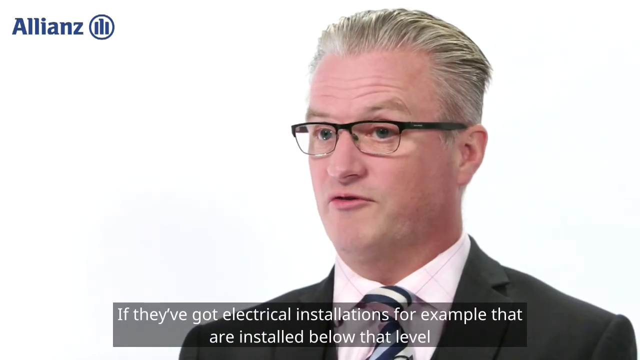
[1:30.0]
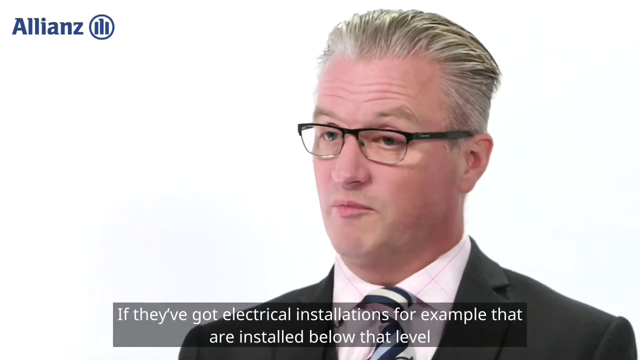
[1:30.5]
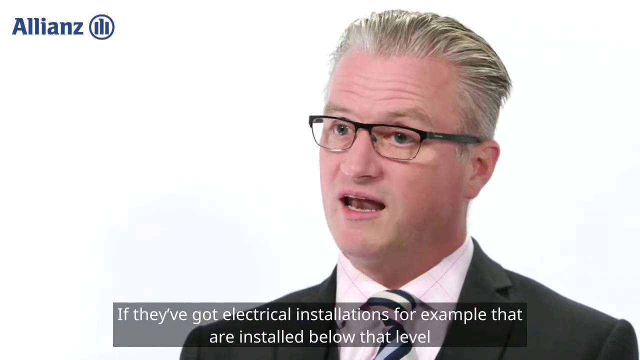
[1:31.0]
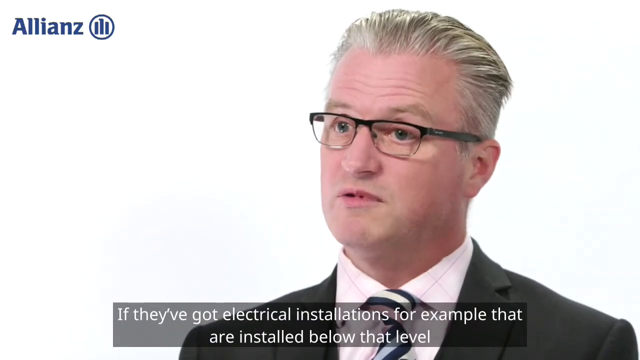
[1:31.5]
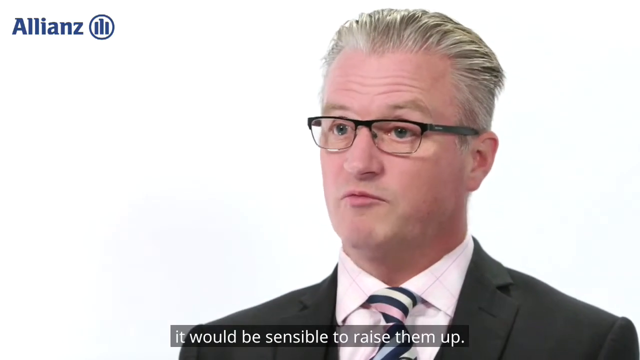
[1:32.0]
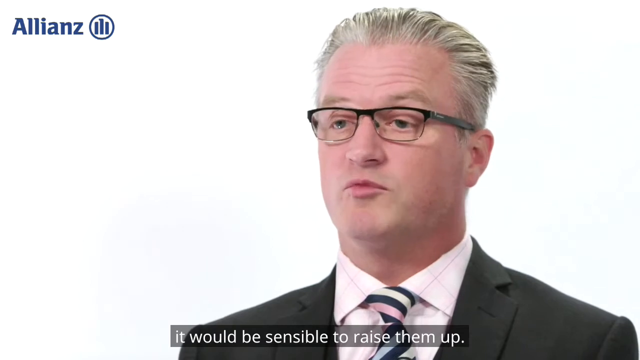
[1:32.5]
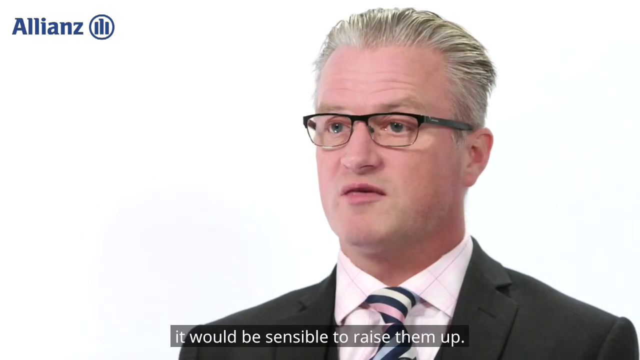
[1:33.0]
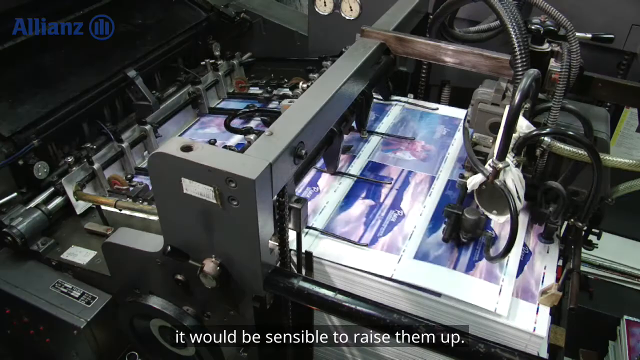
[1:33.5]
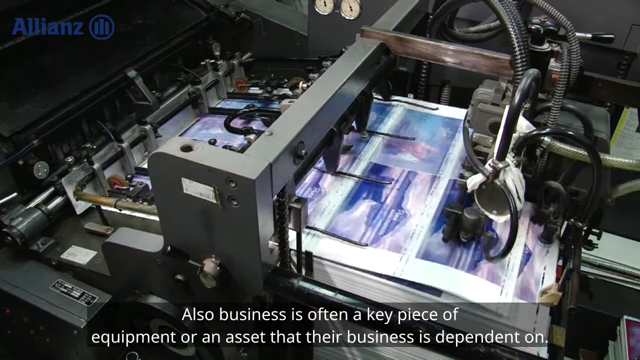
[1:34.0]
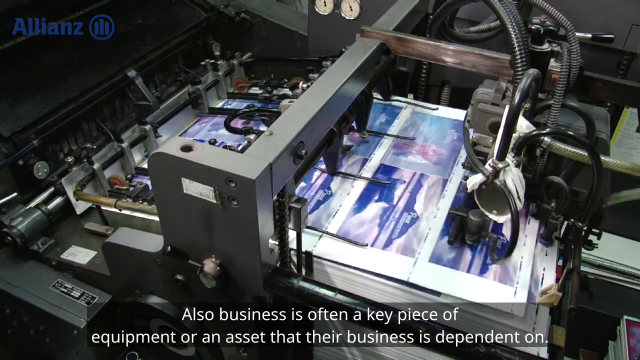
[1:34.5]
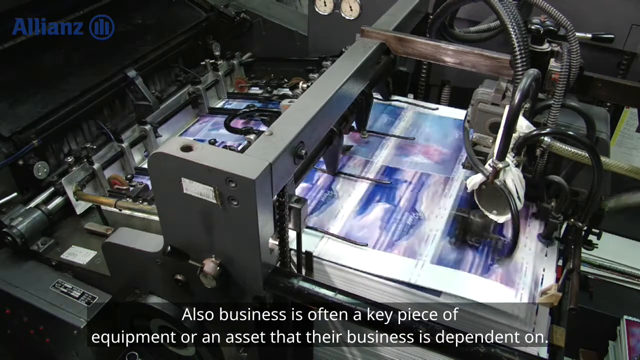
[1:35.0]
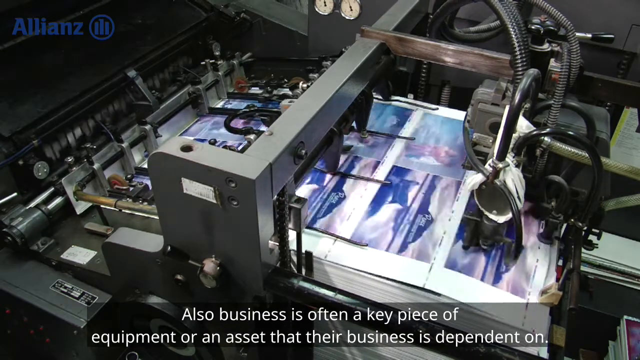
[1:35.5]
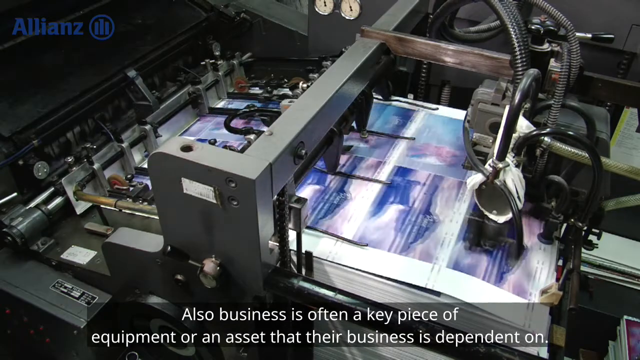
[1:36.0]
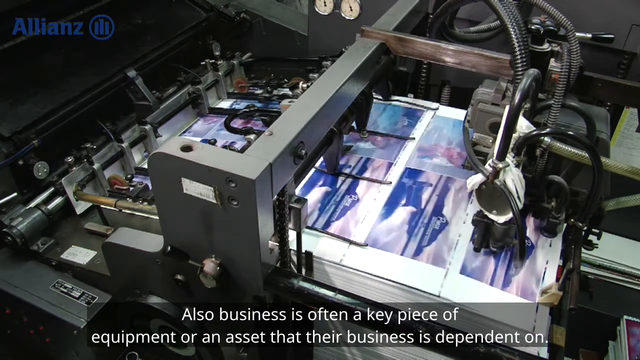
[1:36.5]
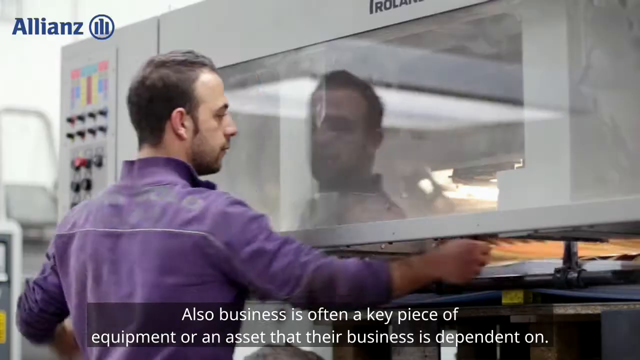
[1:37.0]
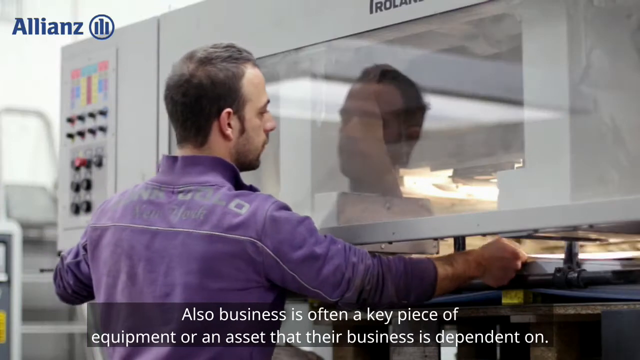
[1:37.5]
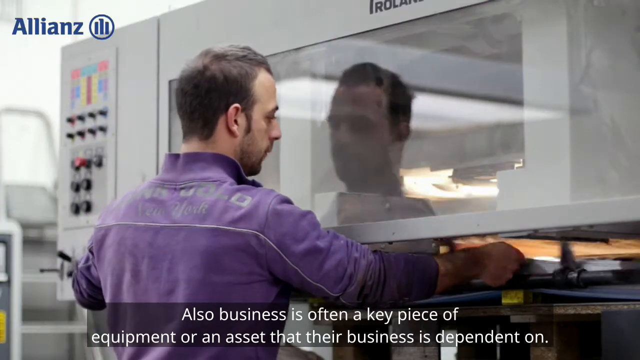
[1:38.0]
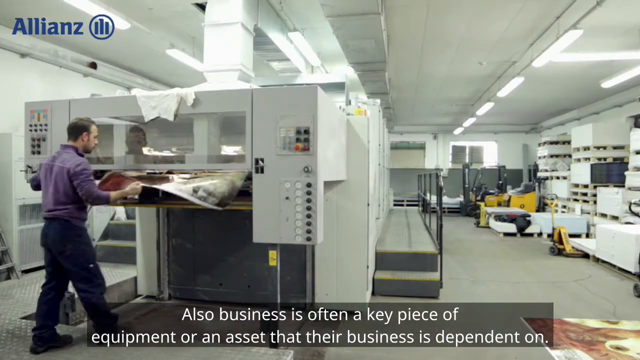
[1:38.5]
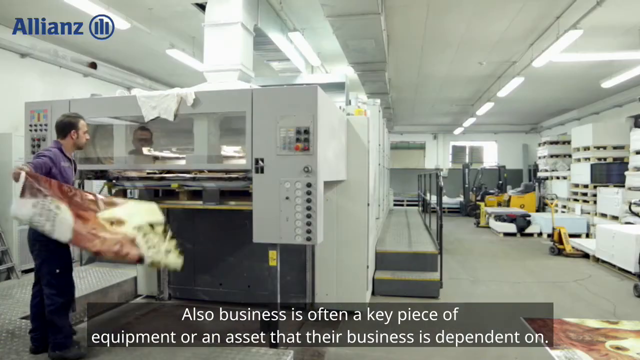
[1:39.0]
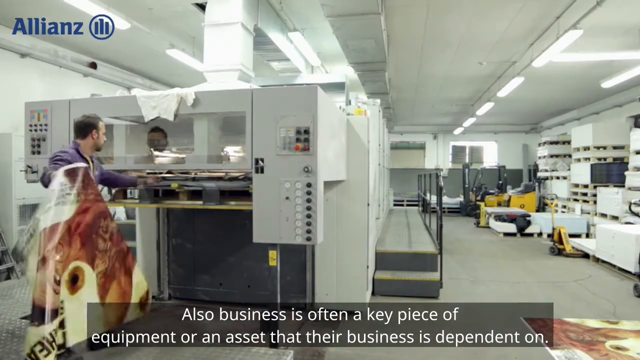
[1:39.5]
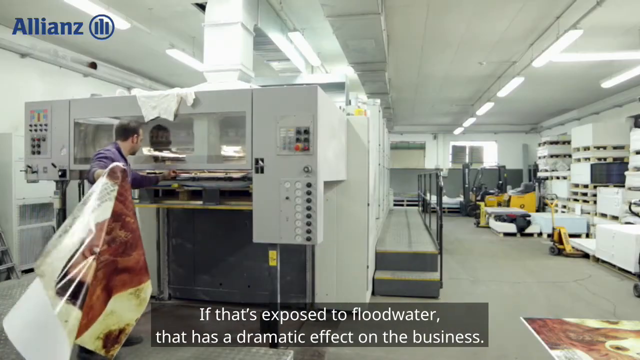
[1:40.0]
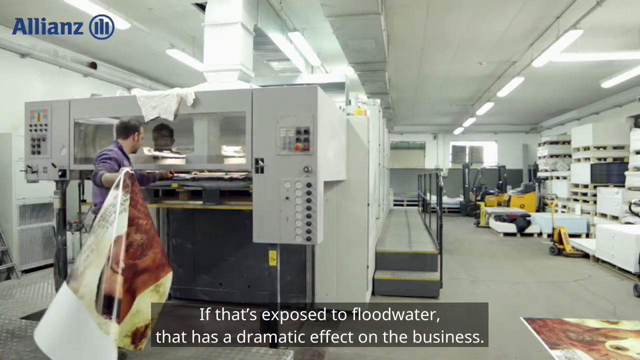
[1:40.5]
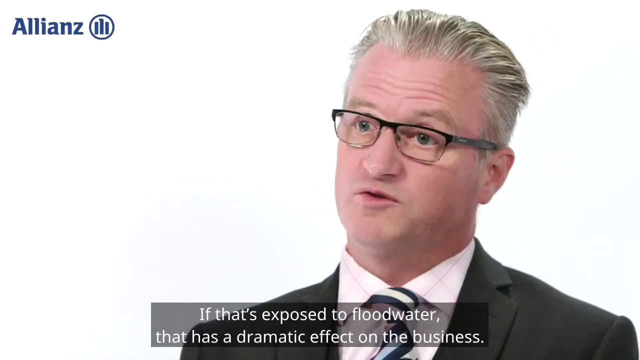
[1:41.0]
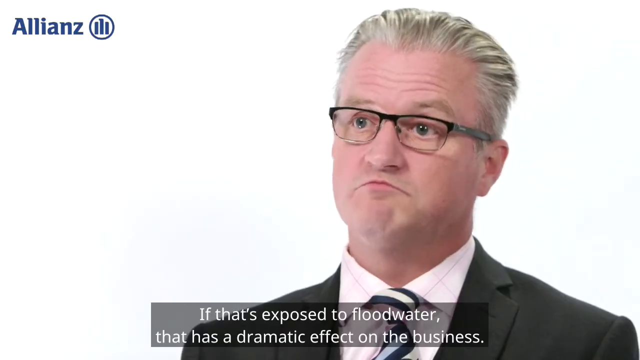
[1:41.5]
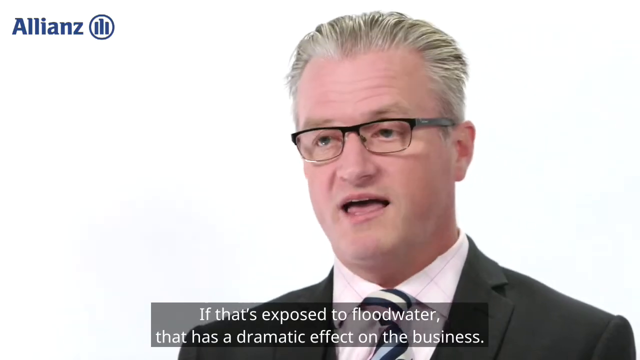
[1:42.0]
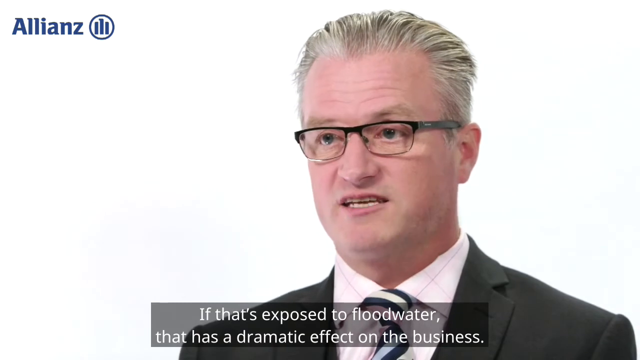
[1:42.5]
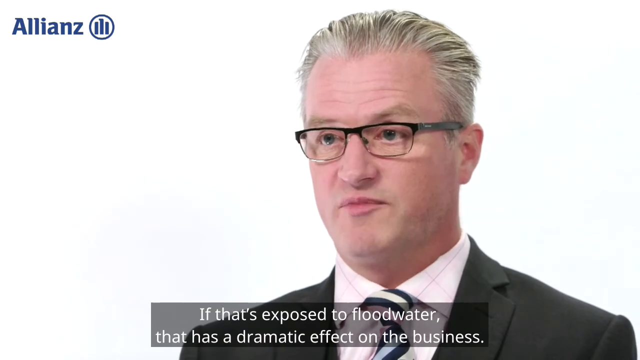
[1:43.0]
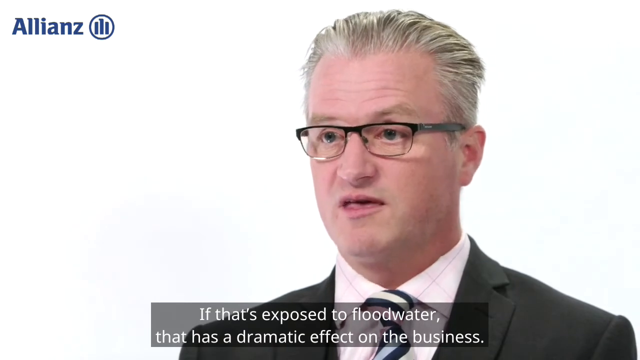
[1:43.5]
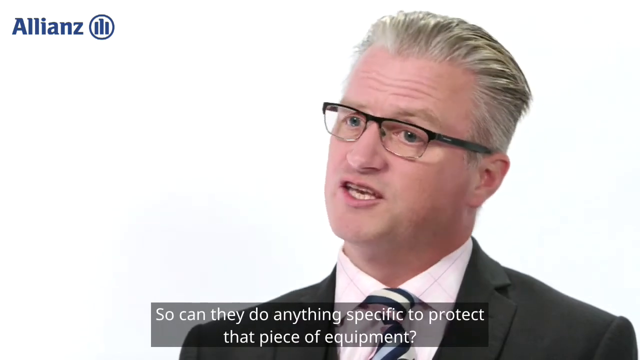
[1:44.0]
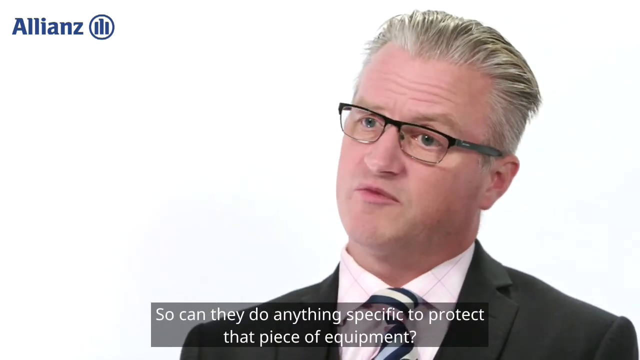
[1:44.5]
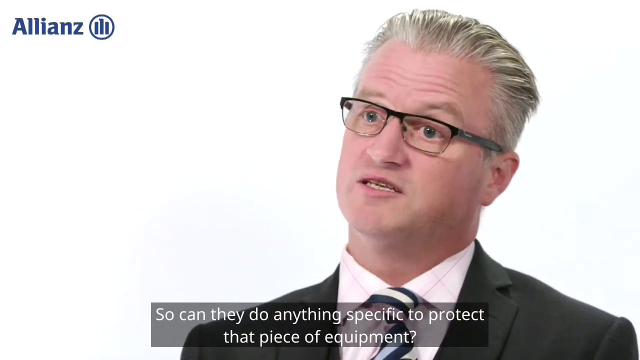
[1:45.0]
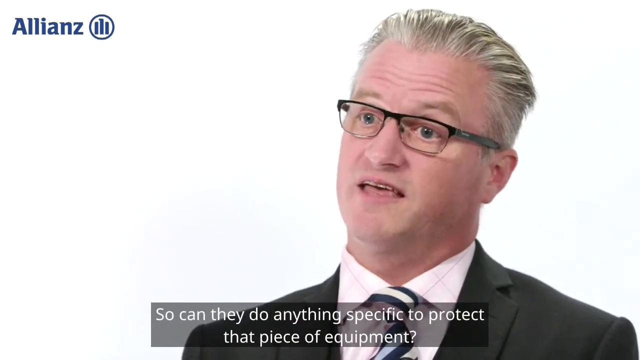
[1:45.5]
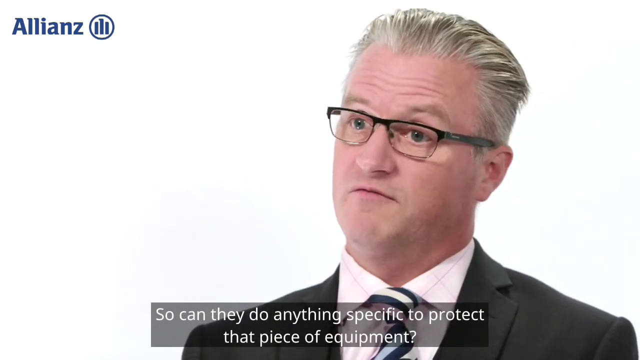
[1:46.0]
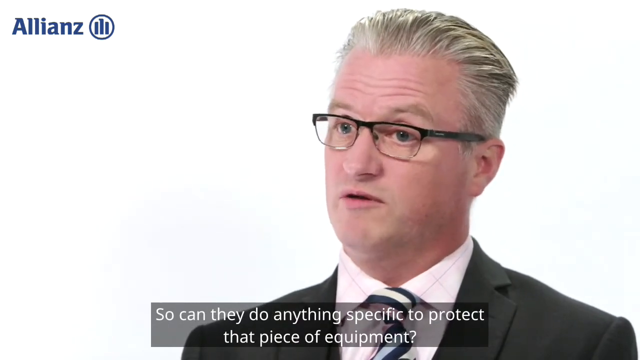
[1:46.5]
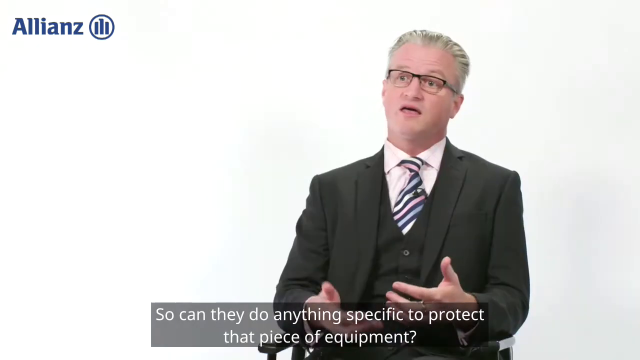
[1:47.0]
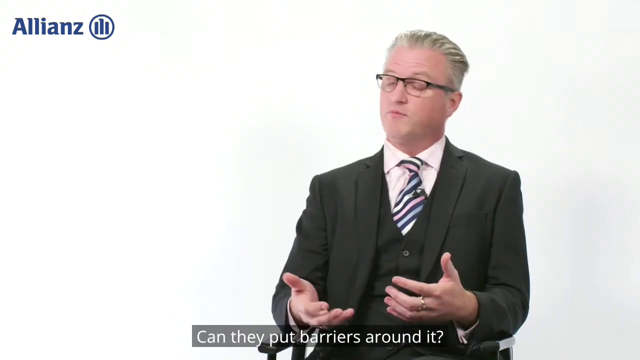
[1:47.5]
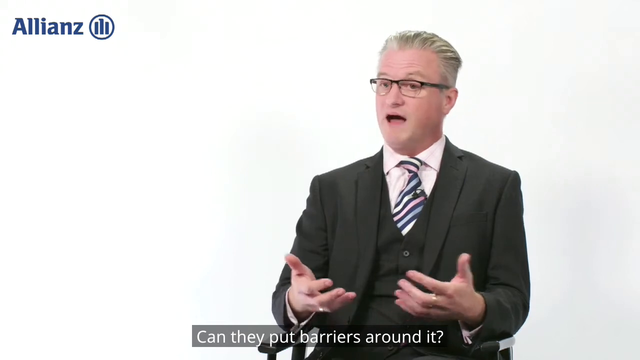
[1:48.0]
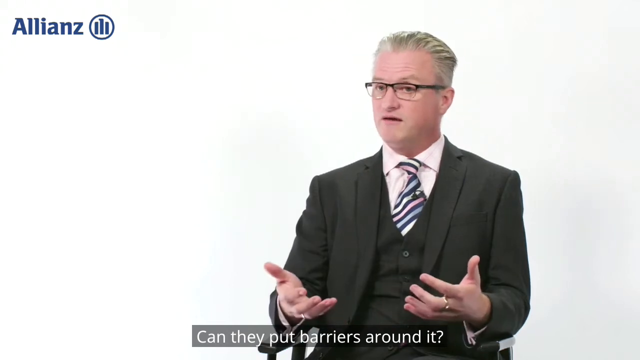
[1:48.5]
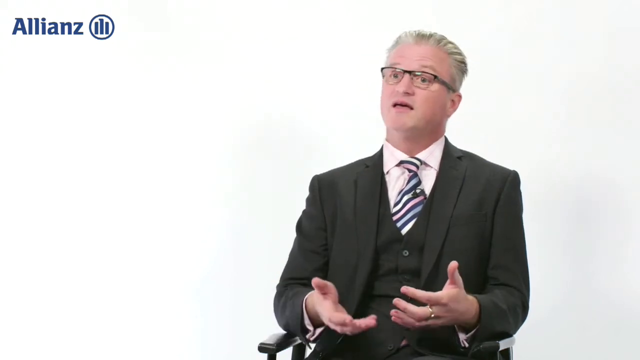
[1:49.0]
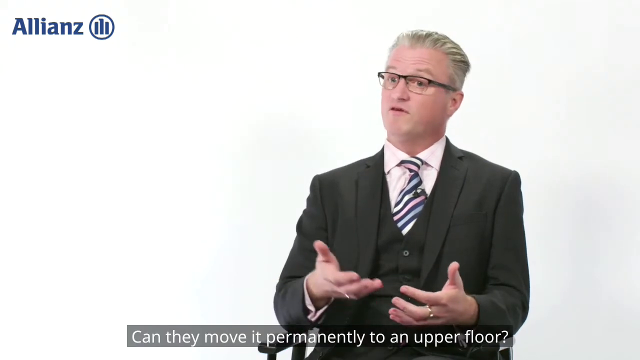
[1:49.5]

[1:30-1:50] ALLINCE appears in blue in the upper left-hand corner. The risk management expert is still talking, and the white line of text at the bottom reads "it would be sensible to raise them up," "If that's exposed to flood water, that's a dramatic effect on the business," and "can they put barriers around it, can they move it permanently to upper level." As he talks, he moves his hand, lifting it up a little.